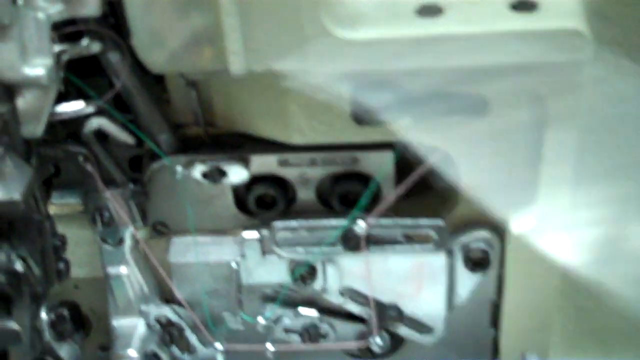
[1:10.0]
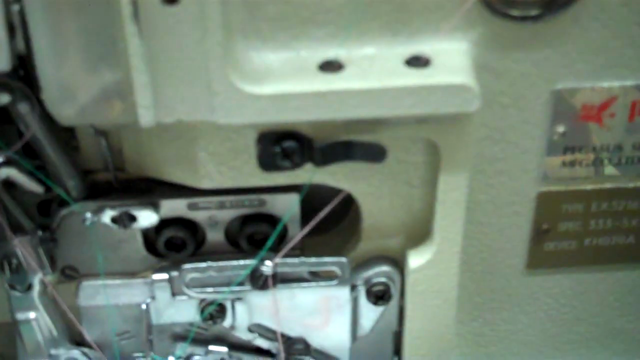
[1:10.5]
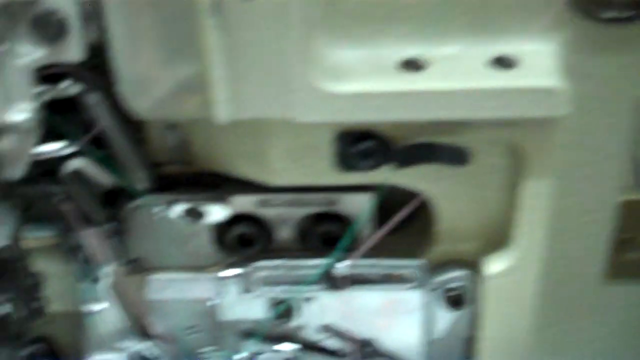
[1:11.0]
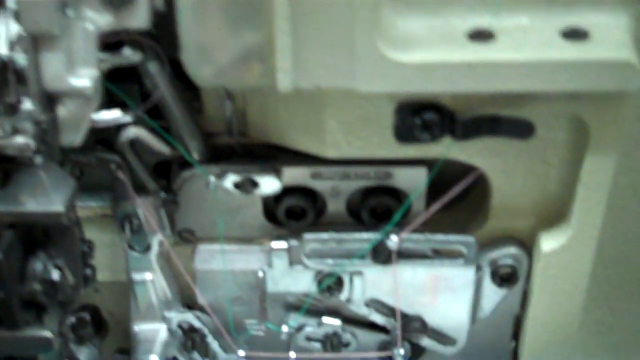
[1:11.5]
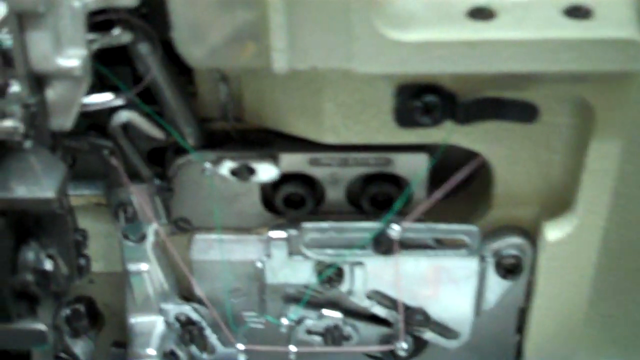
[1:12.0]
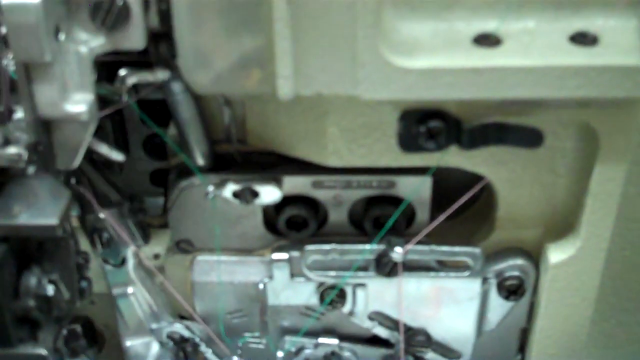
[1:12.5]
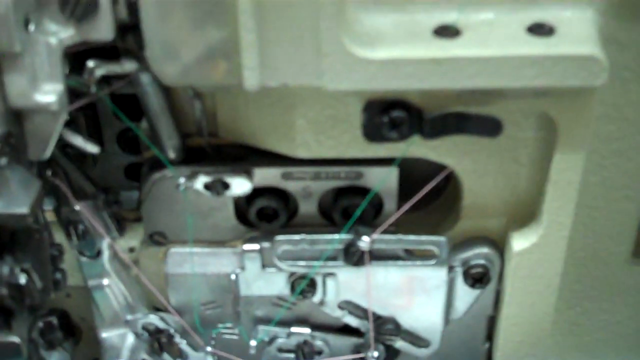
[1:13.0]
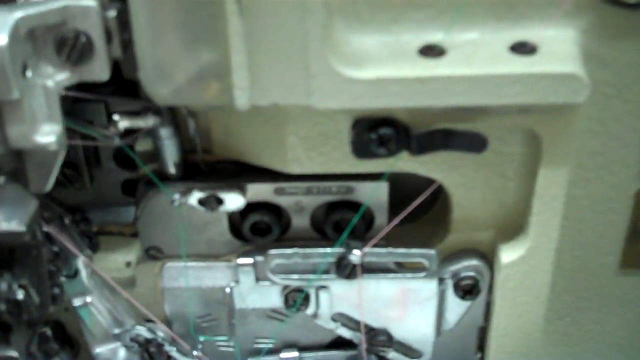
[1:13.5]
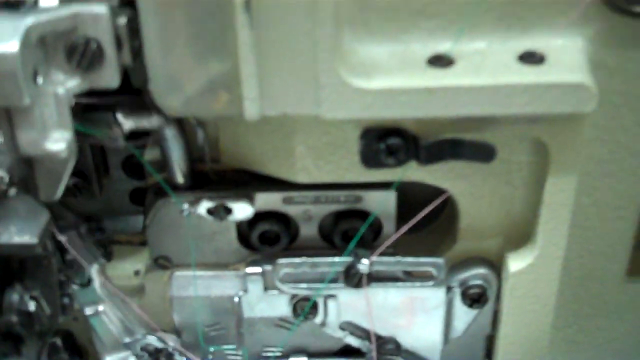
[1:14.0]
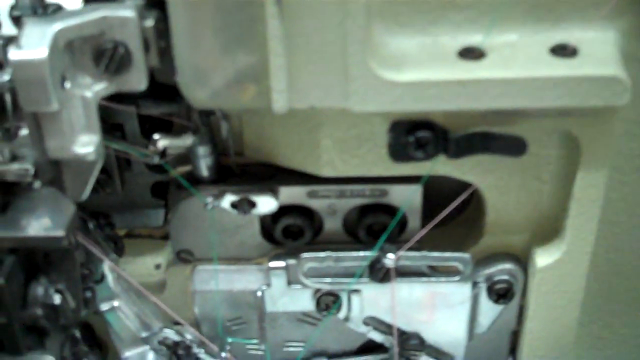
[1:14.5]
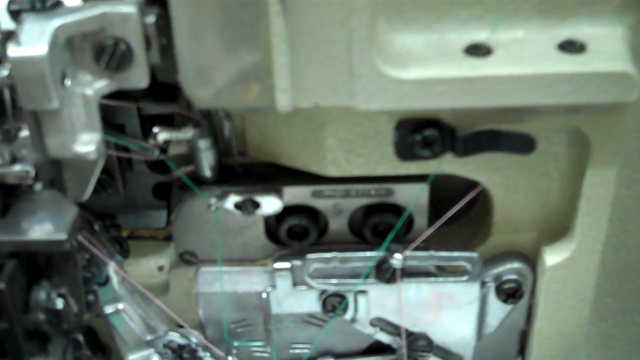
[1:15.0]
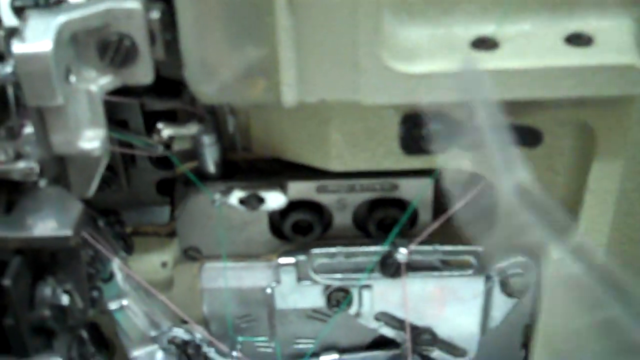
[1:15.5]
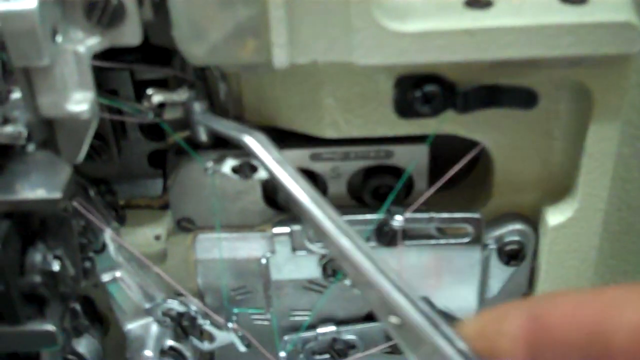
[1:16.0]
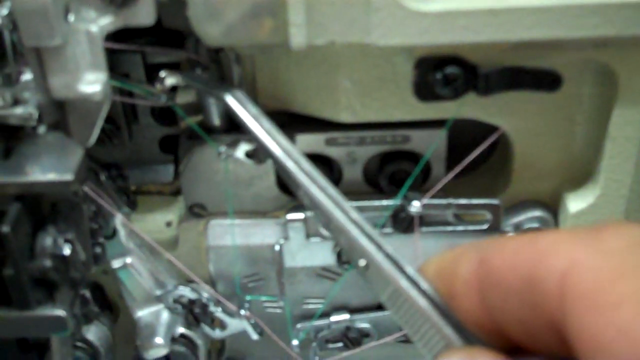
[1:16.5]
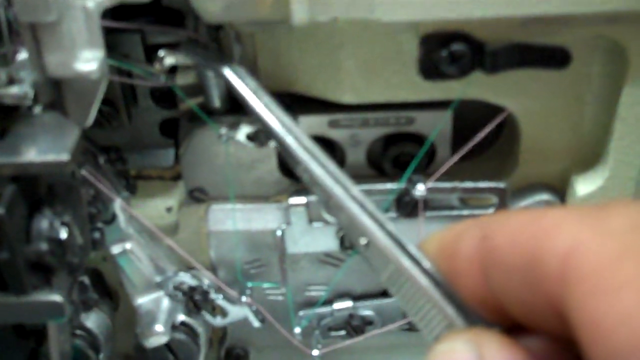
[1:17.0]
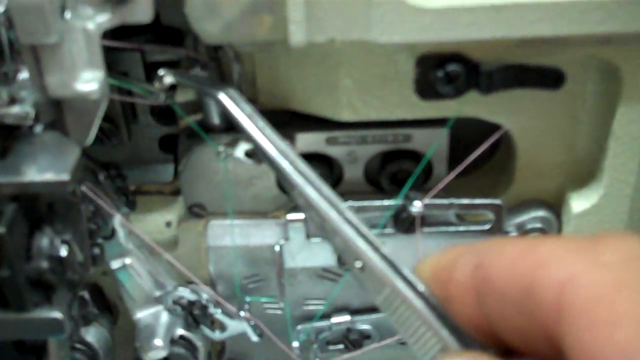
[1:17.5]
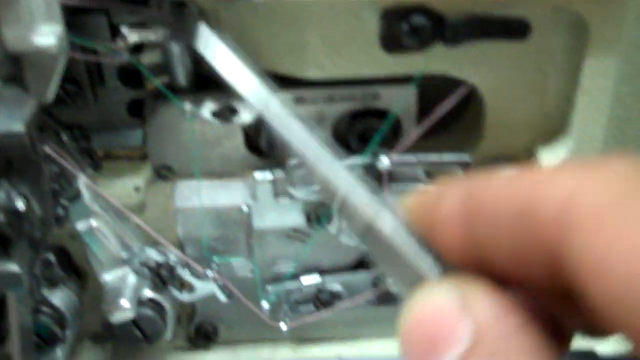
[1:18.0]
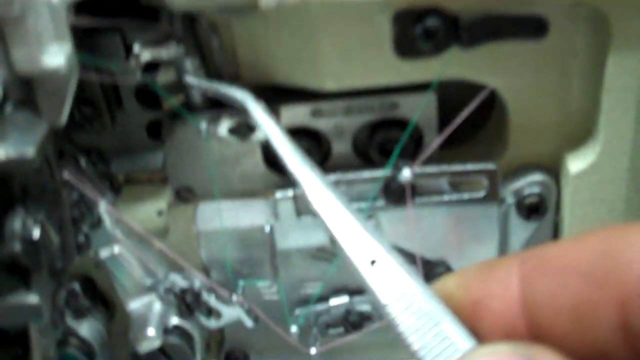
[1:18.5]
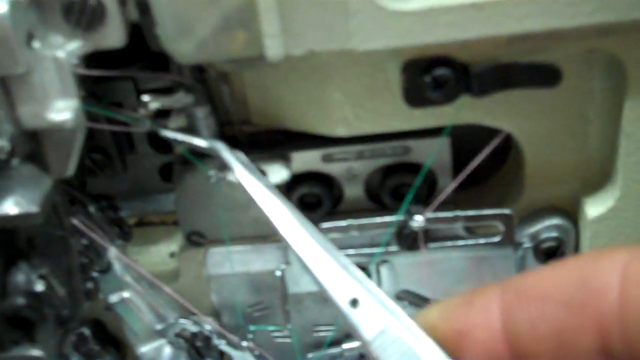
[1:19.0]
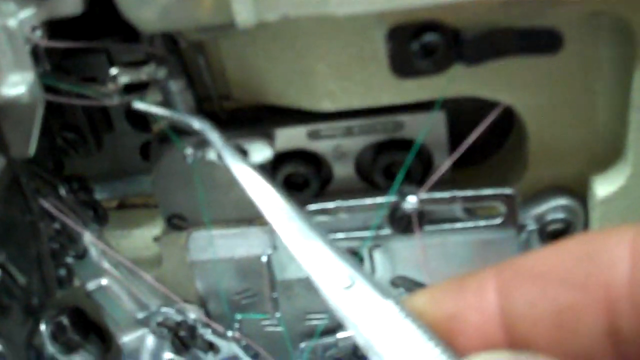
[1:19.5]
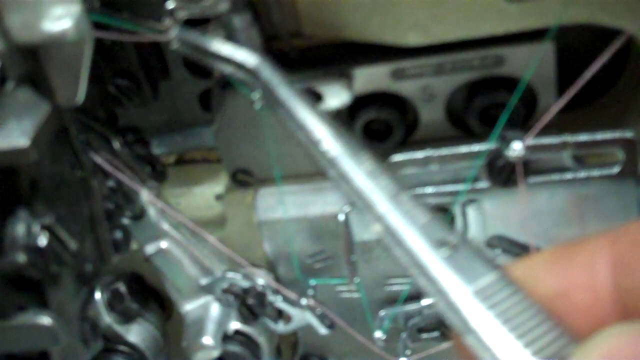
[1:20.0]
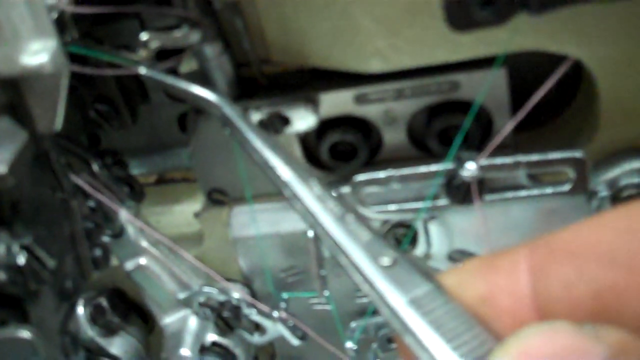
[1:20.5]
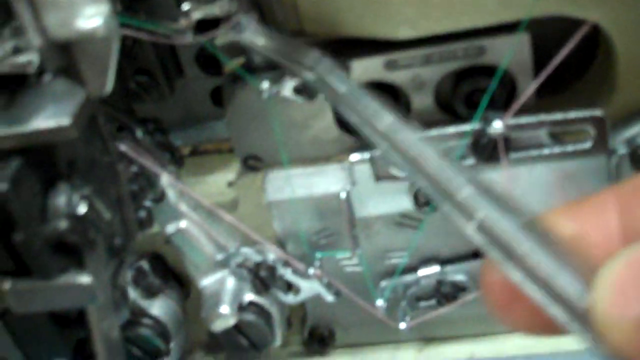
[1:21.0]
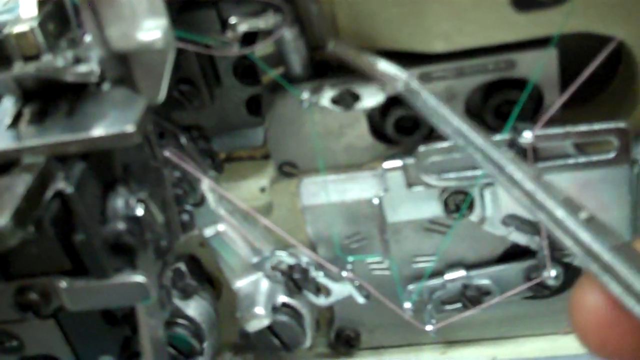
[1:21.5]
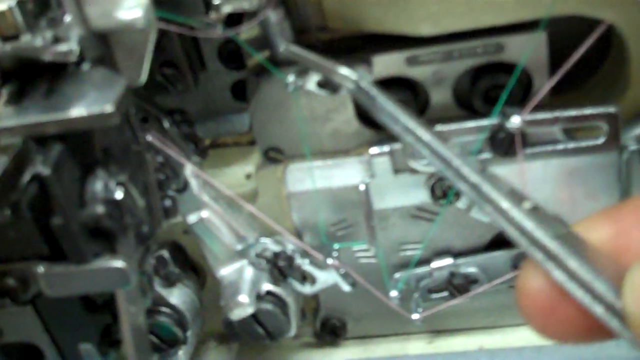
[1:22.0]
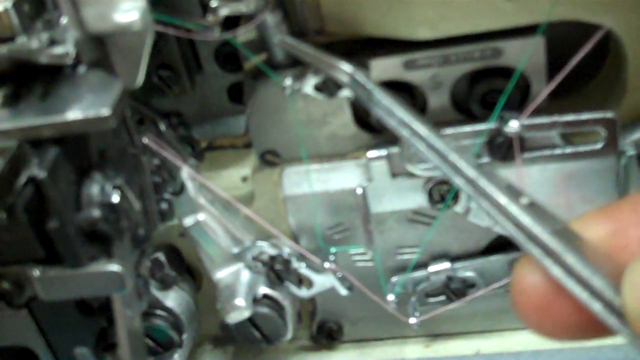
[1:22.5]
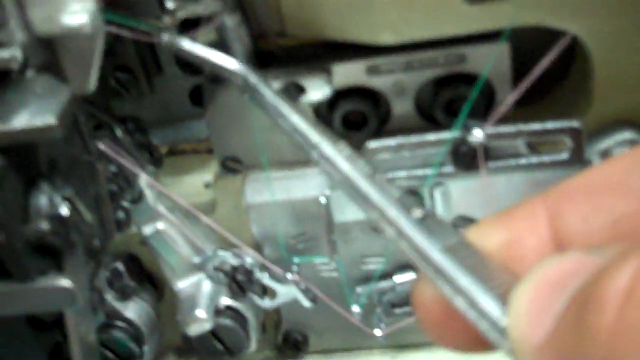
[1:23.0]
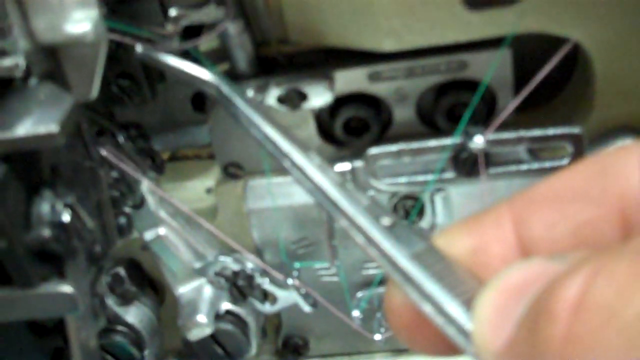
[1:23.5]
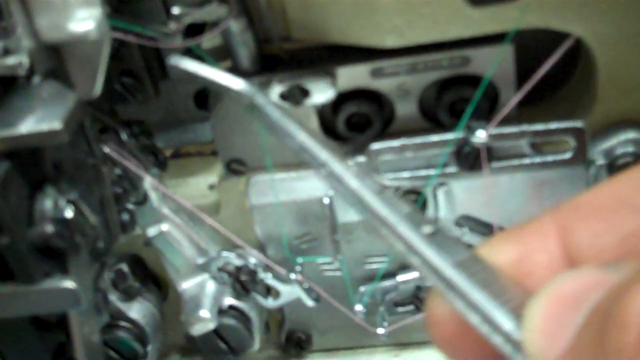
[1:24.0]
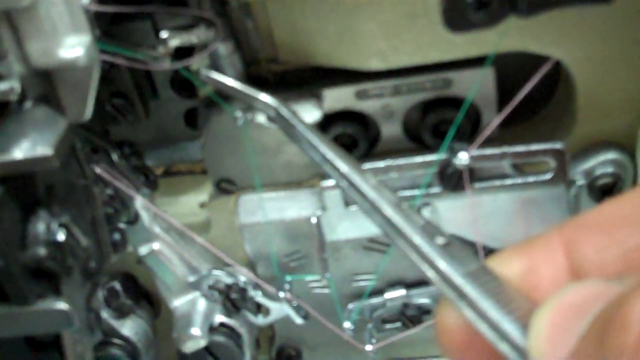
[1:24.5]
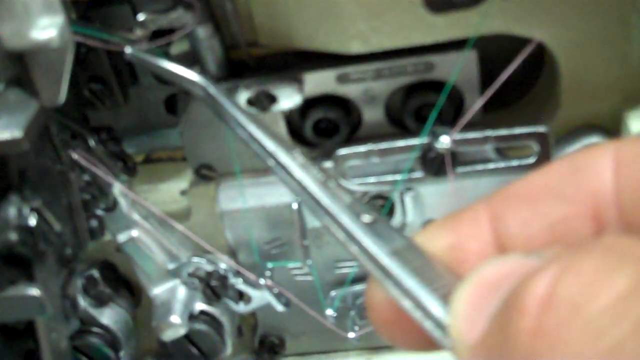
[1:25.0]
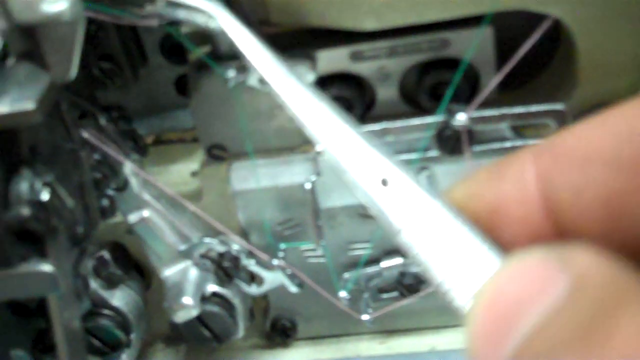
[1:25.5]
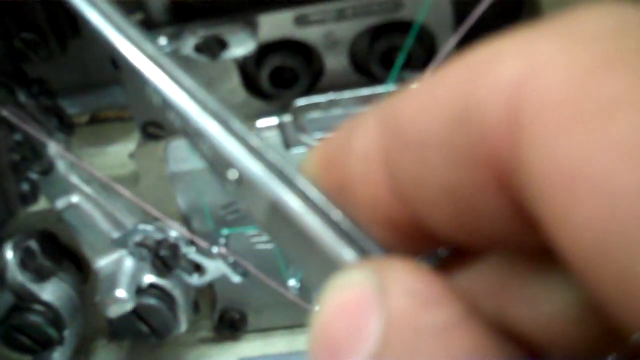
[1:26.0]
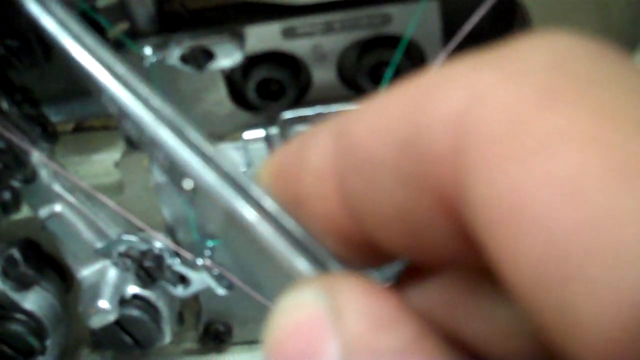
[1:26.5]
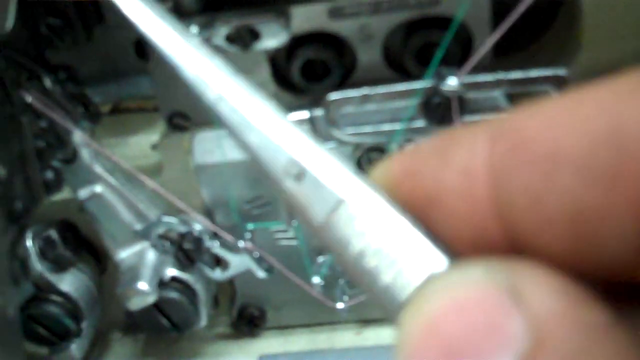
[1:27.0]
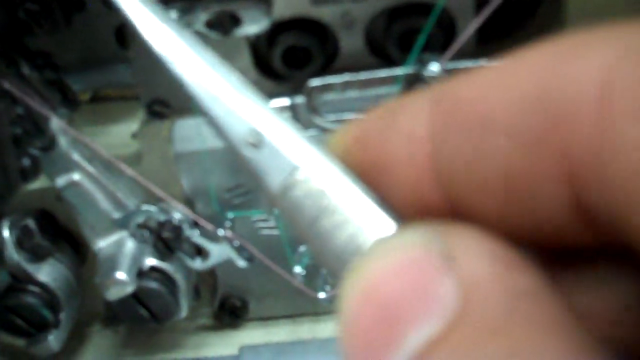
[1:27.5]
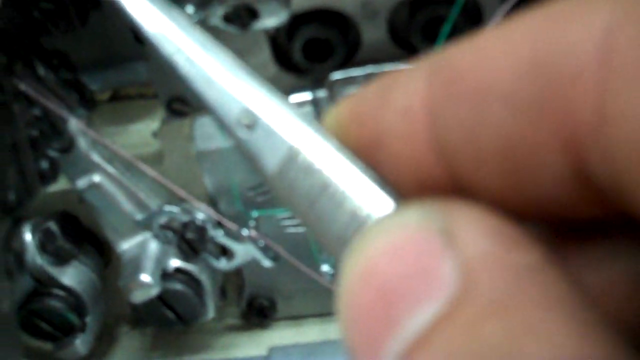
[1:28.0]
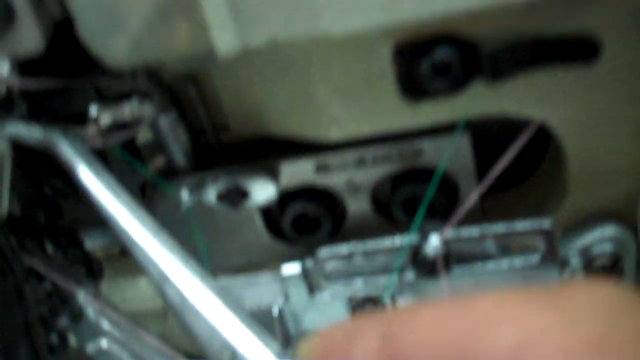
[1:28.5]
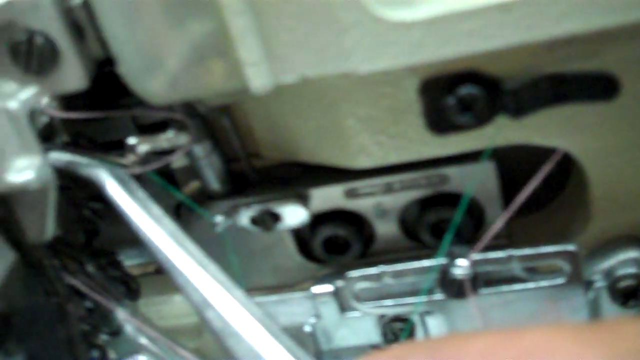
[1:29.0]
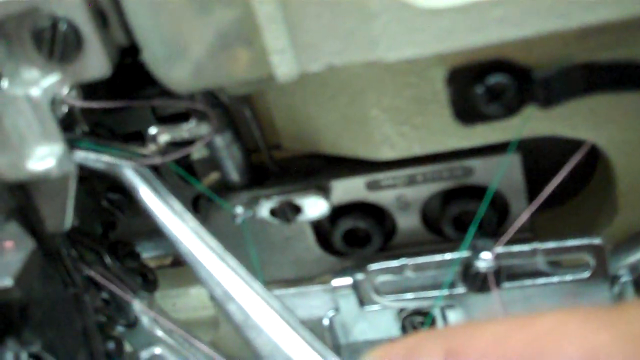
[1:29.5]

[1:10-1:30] A close-up shot of the back of the sewing machine shows the metal pieces and screws, with the green thread and the pink thread both intertwined between the different areas of metal pieces and screws. The pink thread follows the outline of the green thread. More metal parts move near the top; these pieces are shaped like two small arms, and each has thread attached to it. As the metal arms move, the green and pink threads are pulled in an up-and-down motion, and a larger piece of metal near them also moves. A hand with tweezers reaches in to make adjustments, and the tweezers pull the pink thread.